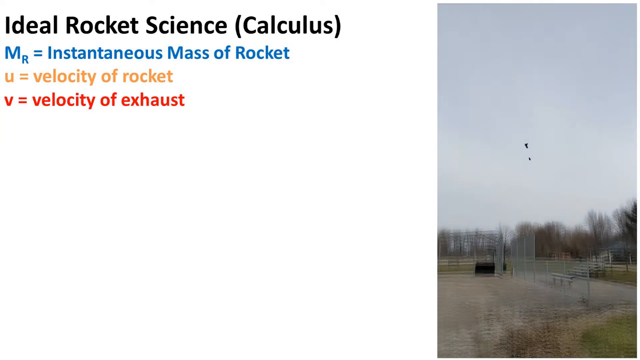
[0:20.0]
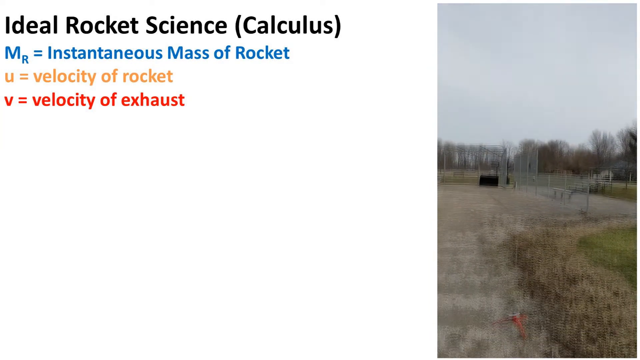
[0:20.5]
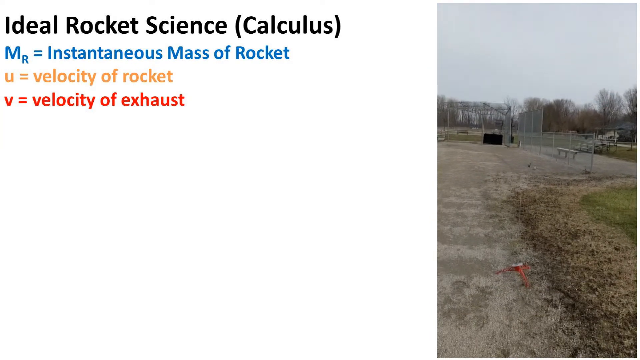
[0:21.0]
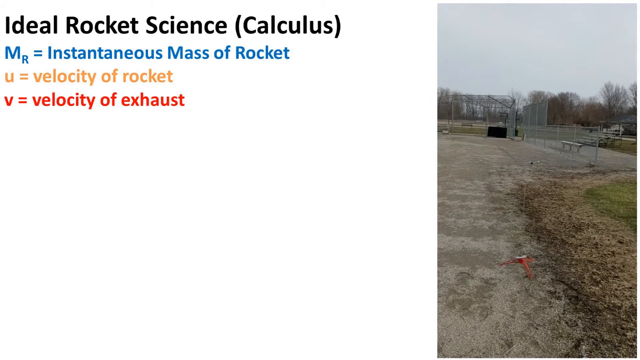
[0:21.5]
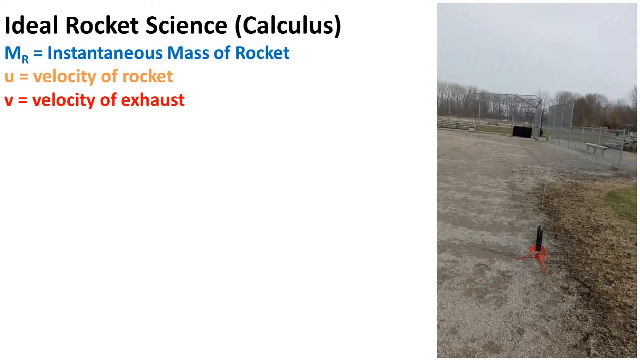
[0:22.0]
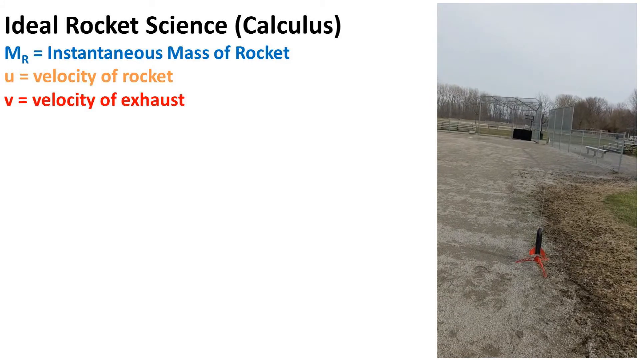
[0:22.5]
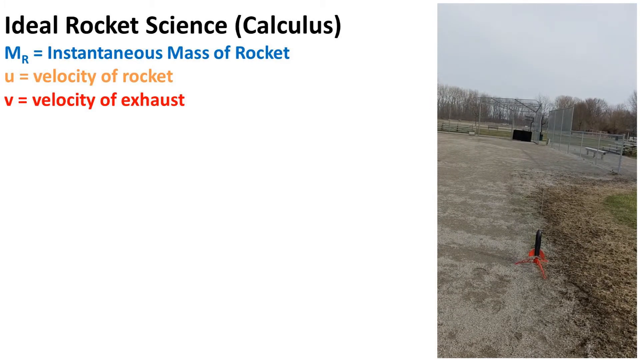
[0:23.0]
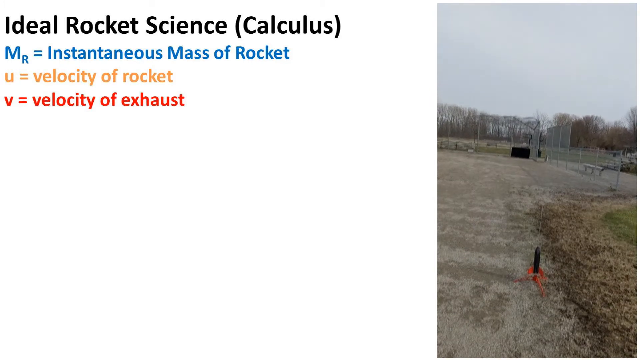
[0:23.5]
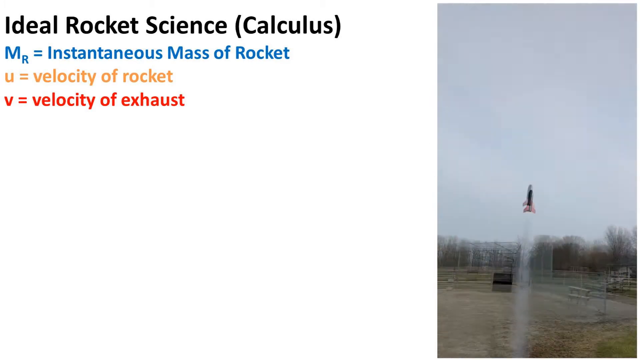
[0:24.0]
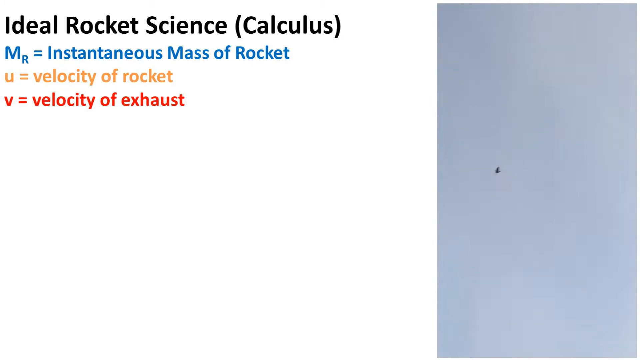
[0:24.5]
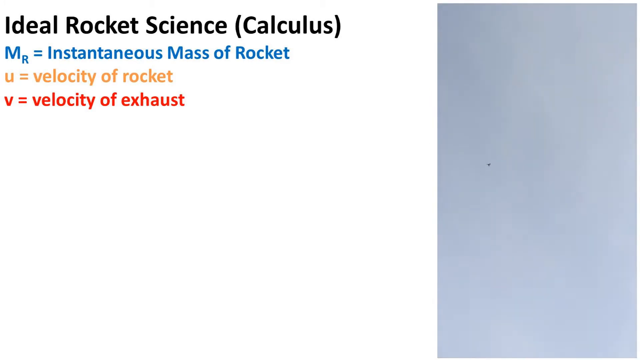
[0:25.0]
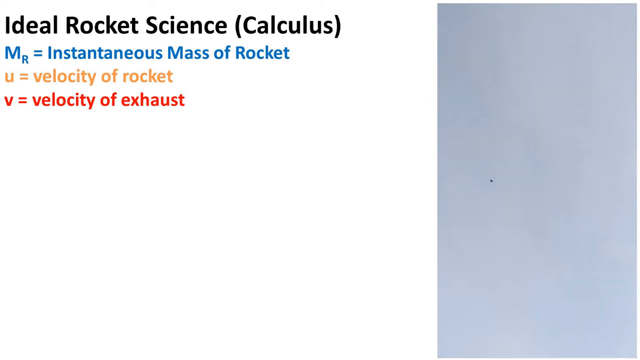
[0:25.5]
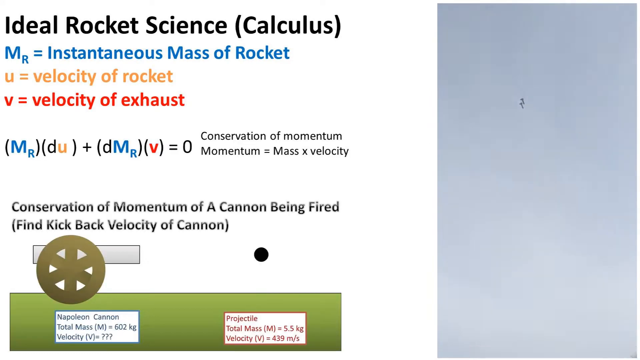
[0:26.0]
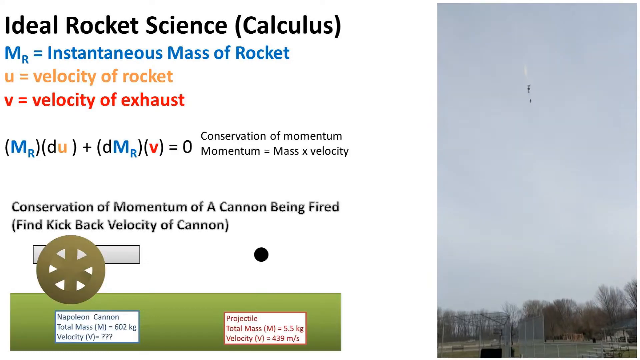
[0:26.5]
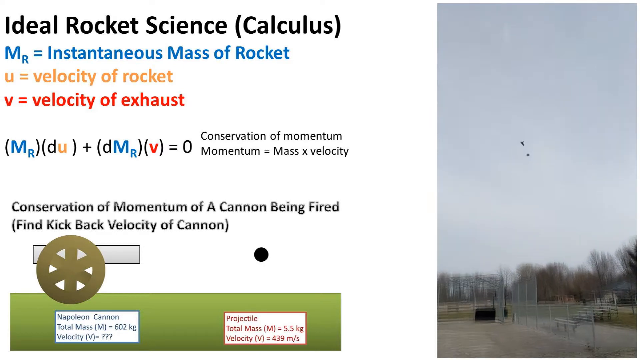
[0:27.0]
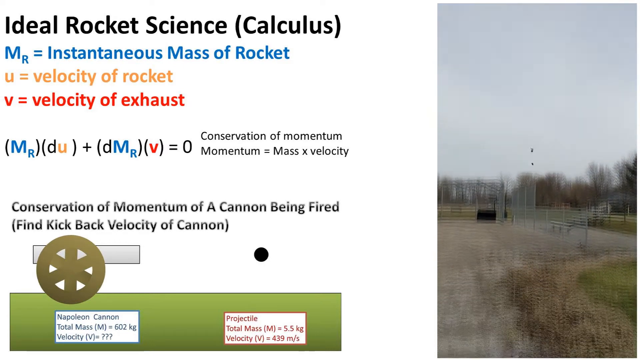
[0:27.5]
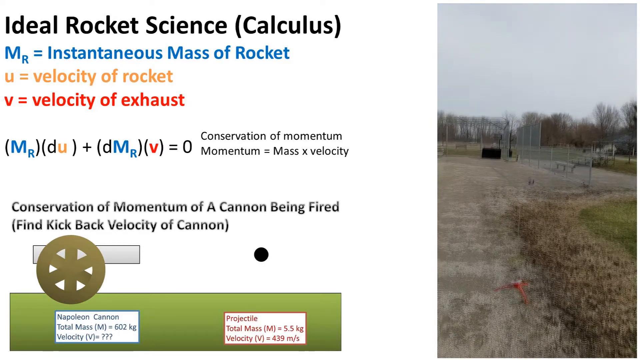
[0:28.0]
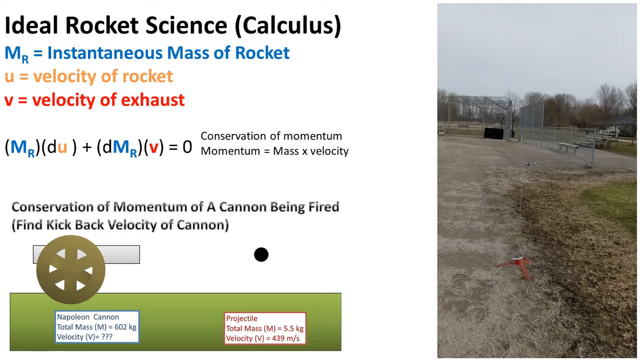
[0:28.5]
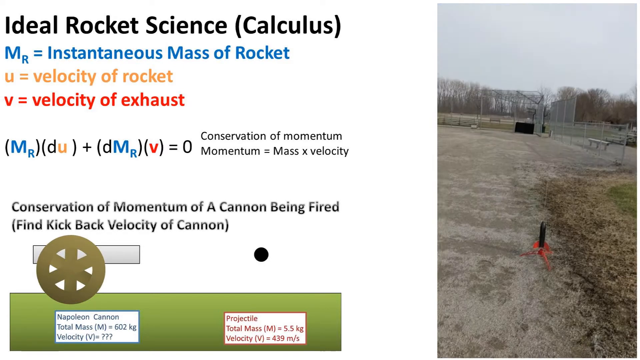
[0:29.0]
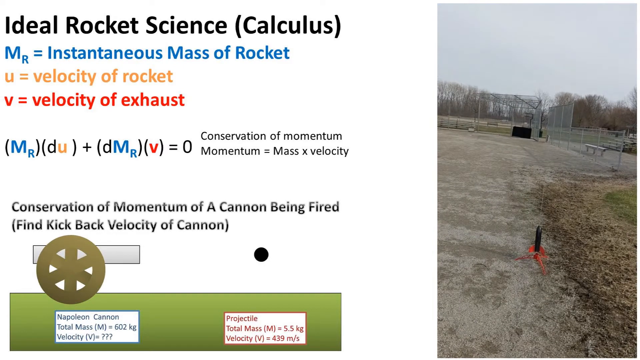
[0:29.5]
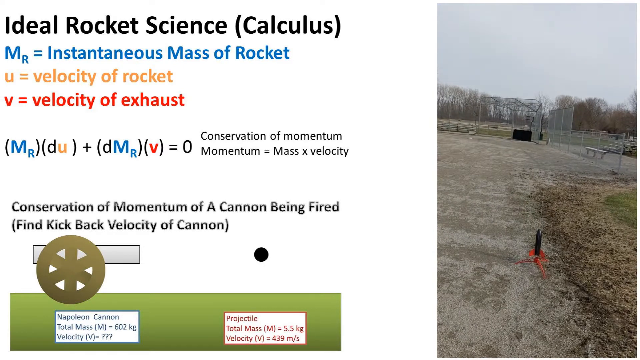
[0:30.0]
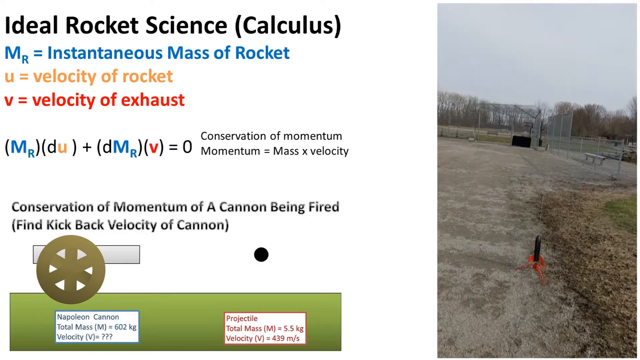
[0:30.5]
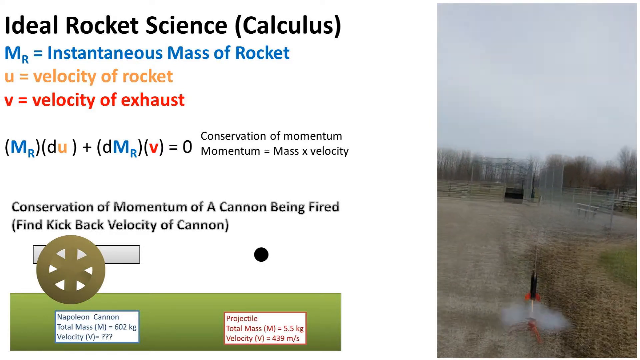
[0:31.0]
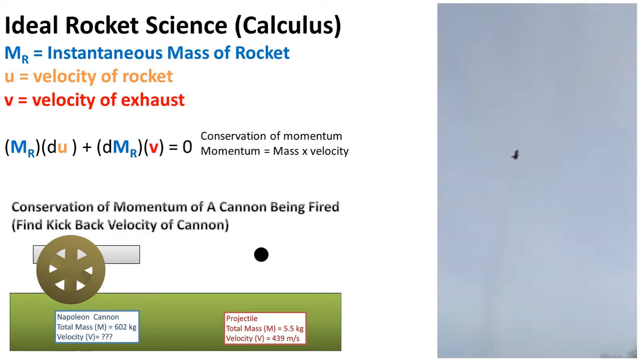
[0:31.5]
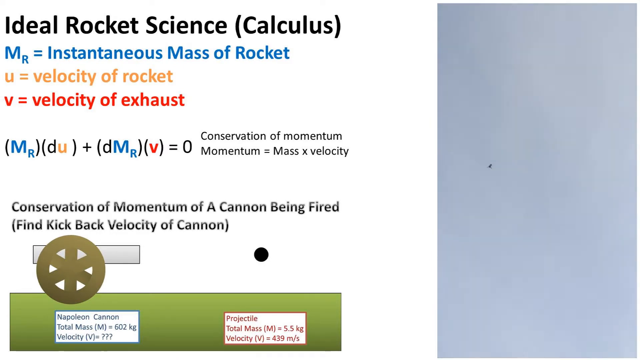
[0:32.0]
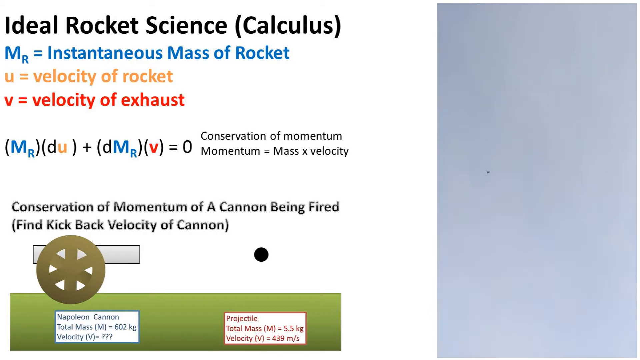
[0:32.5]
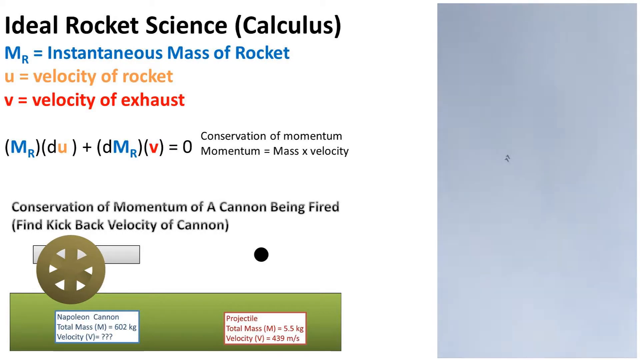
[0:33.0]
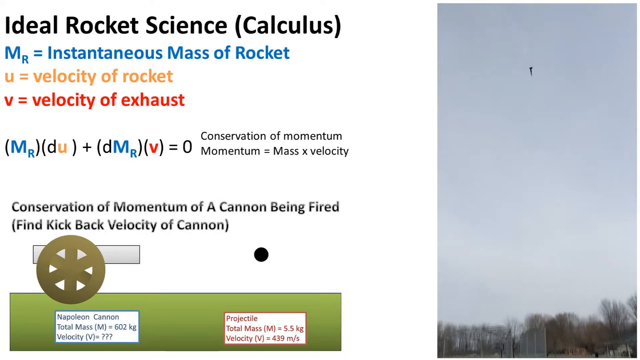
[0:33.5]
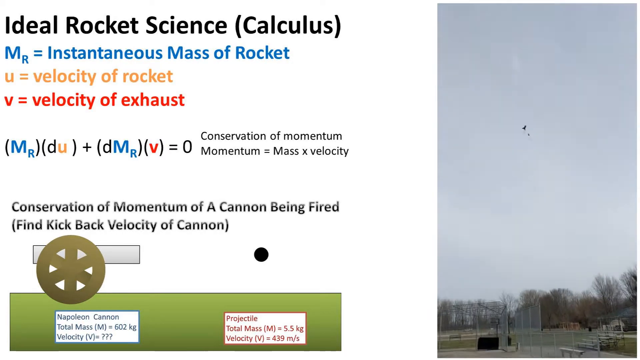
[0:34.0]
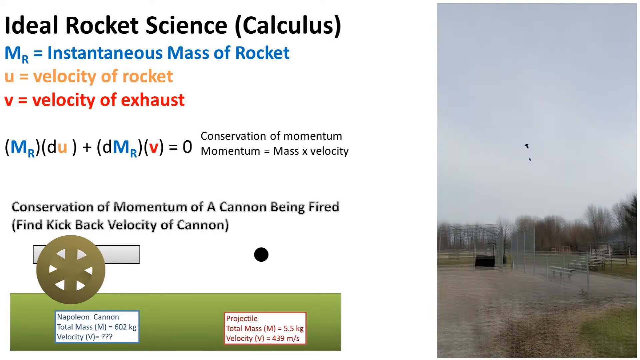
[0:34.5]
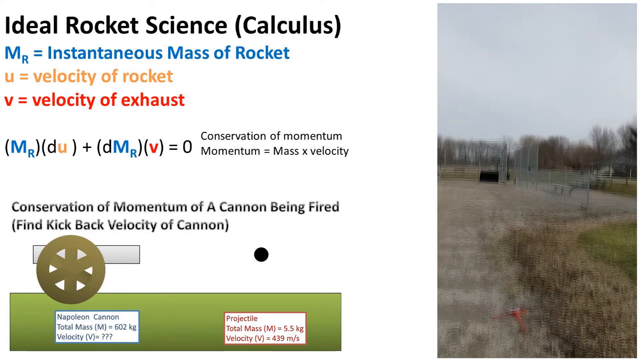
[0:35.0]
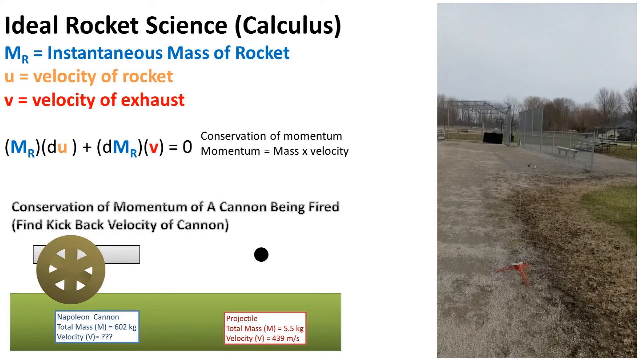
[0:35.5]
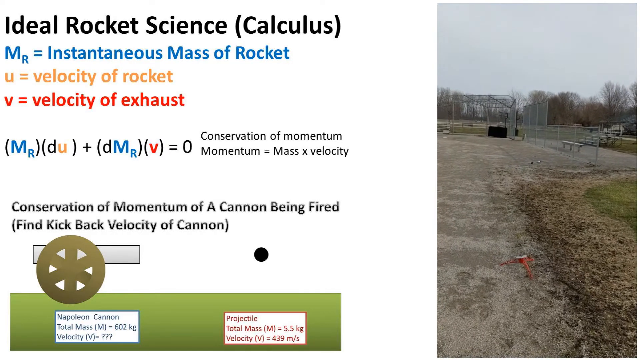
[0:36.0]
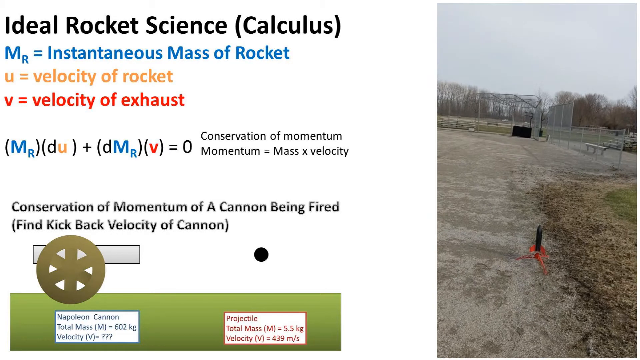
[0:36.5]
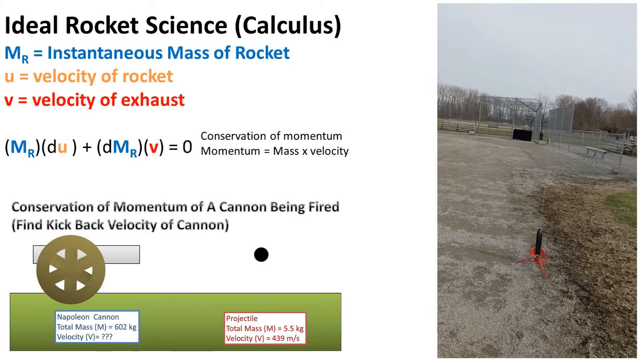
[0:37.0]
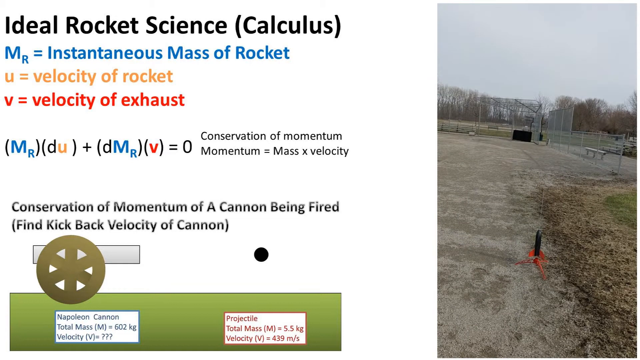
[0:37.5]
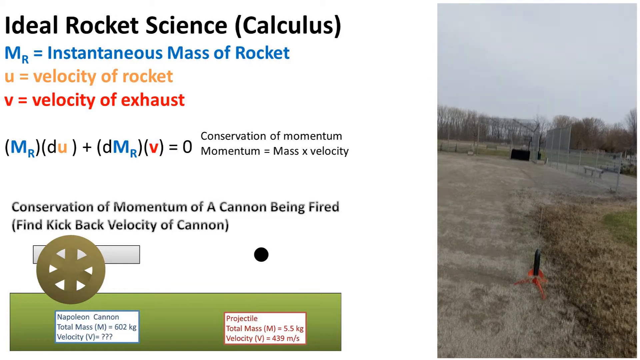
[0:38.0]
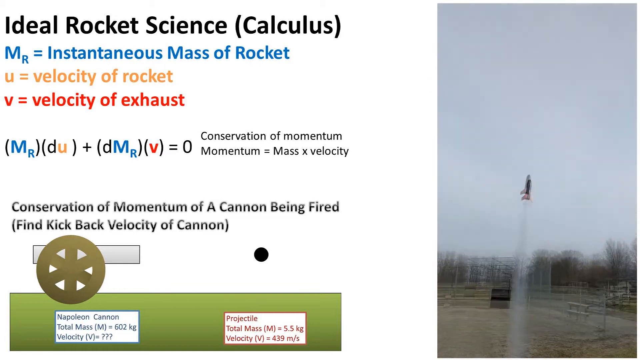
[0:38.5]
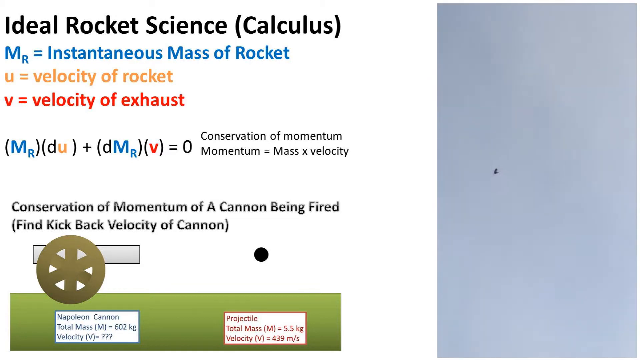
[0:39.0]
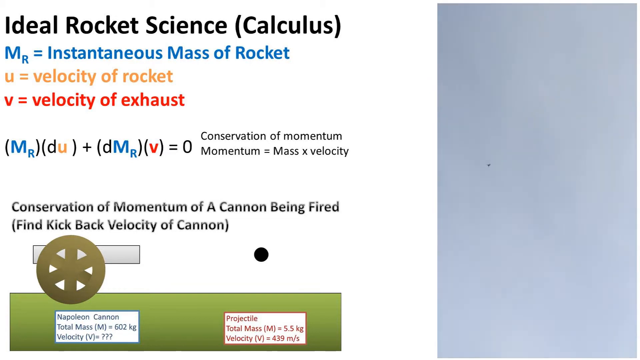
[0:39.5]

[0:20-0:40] The same looping rocket video plays on the right side. On the left, the "Ideal Rocket Science" title and three variables are listed below it, and an equation for the conservation of momentum is now included, set up as momentum equals mass times velocity. The variables from the top left are placed inside the equation: m times du plus d times mass times v, that is, mass times velocity of rocket plus mass times velocity of exhaust. At the bottom of the screen, in black text with a black gradient, is the conservation of momentum of a cannon being fired, and below it, in parentheses, the text reads "Find kickback velocity of cannon", prompting a calculation of a velocity using the equation above.